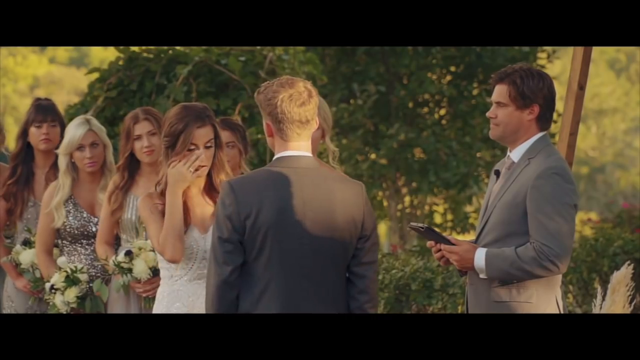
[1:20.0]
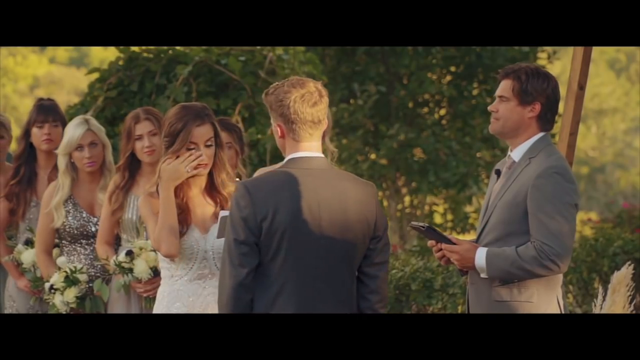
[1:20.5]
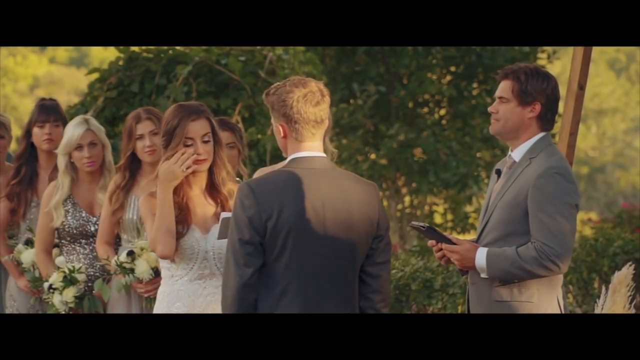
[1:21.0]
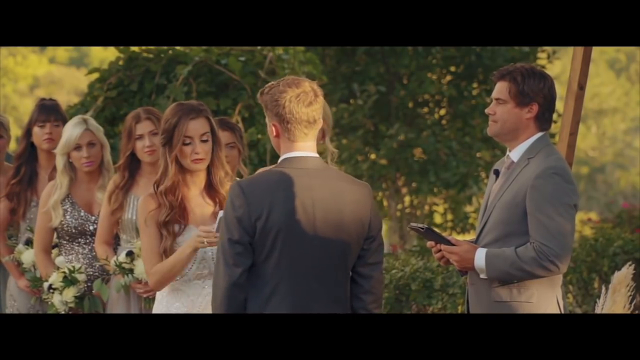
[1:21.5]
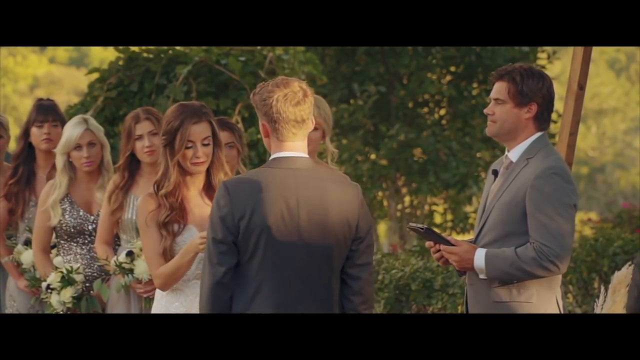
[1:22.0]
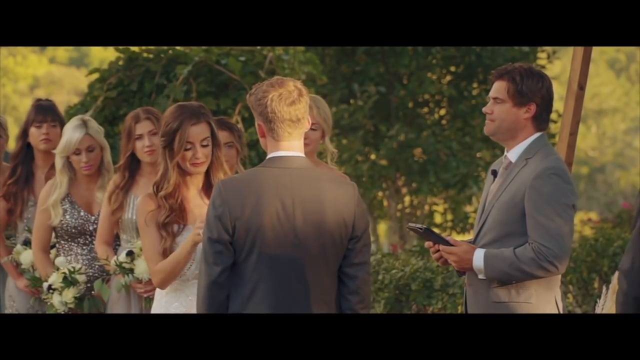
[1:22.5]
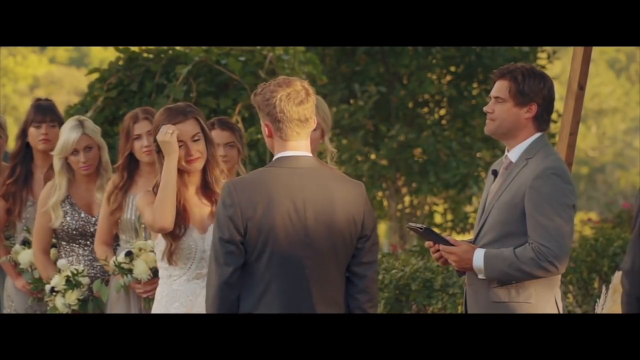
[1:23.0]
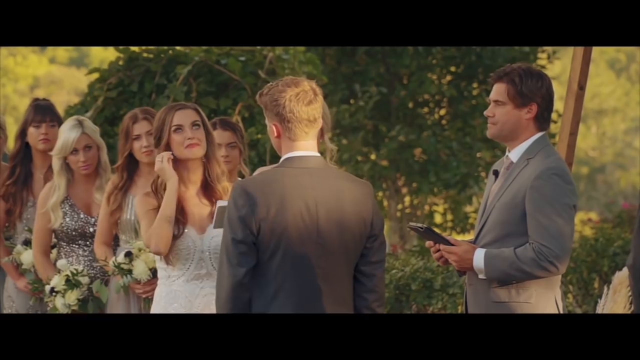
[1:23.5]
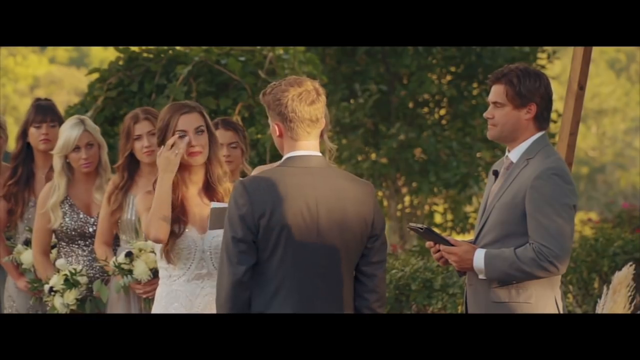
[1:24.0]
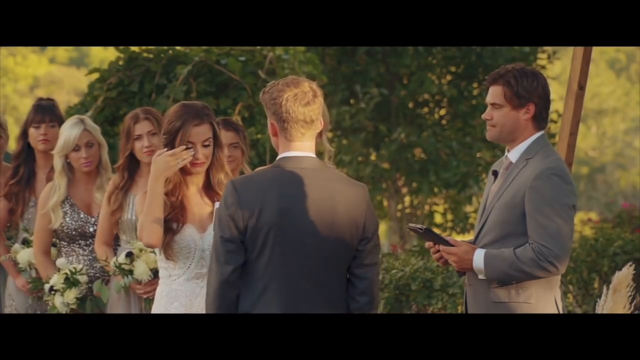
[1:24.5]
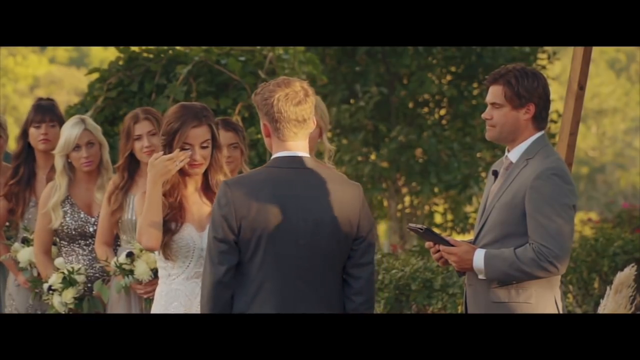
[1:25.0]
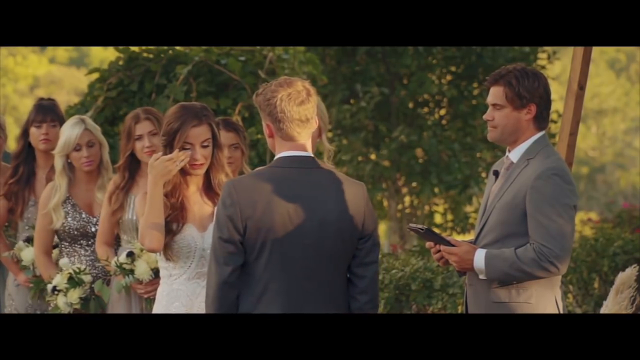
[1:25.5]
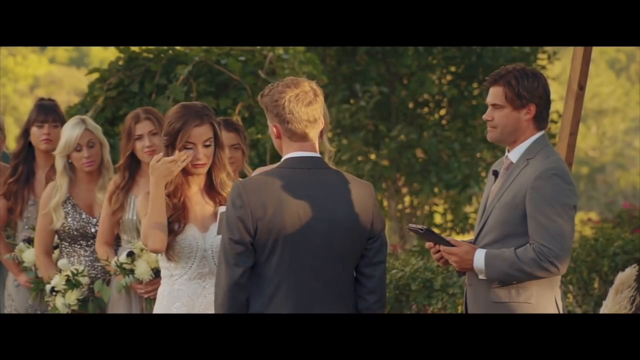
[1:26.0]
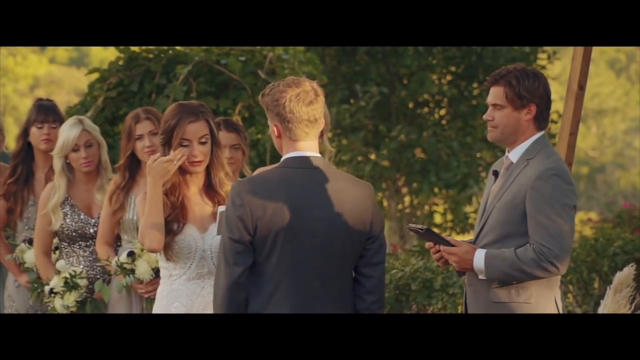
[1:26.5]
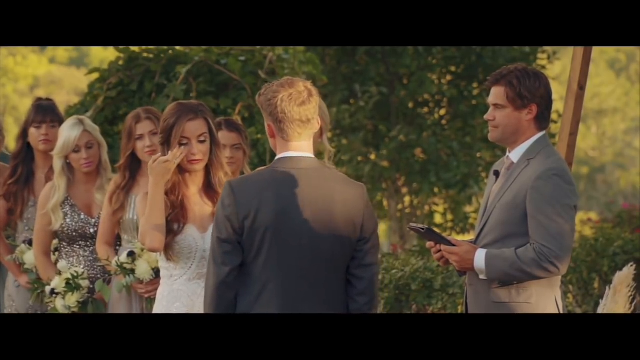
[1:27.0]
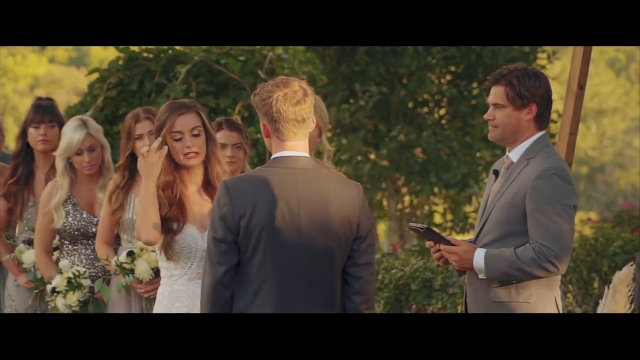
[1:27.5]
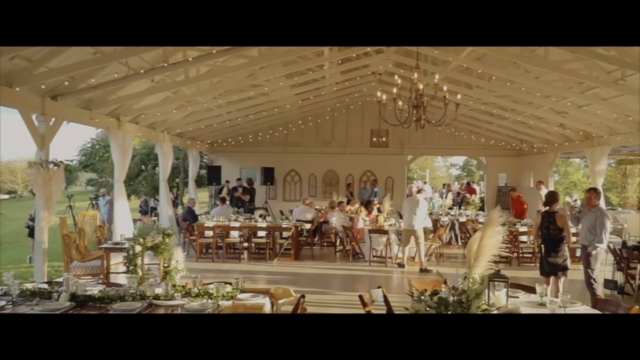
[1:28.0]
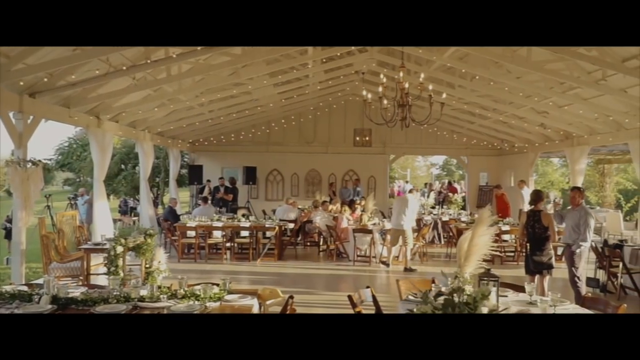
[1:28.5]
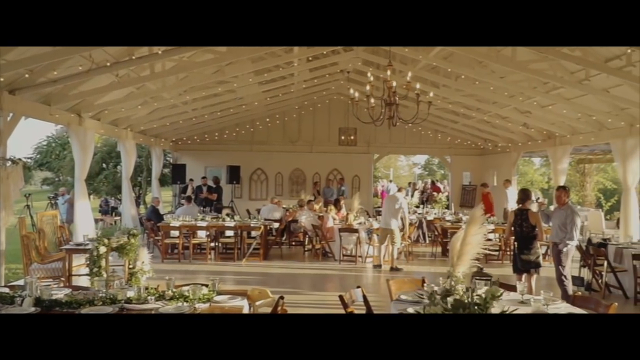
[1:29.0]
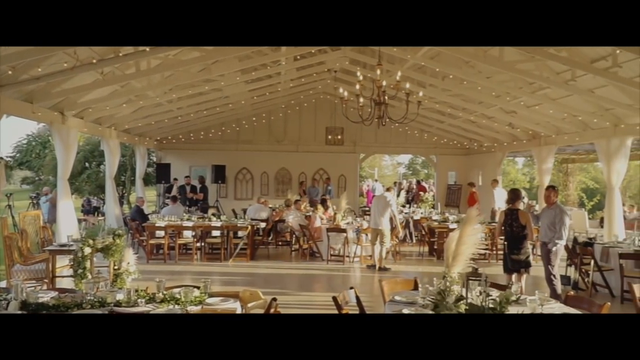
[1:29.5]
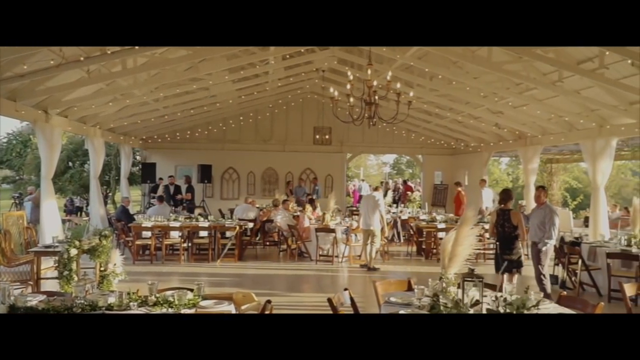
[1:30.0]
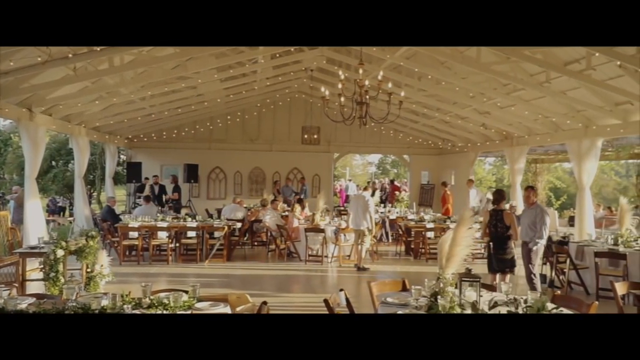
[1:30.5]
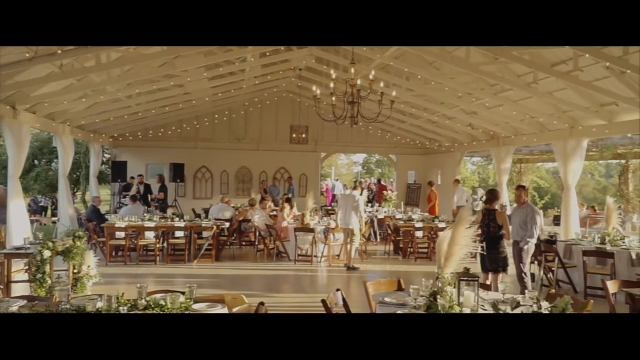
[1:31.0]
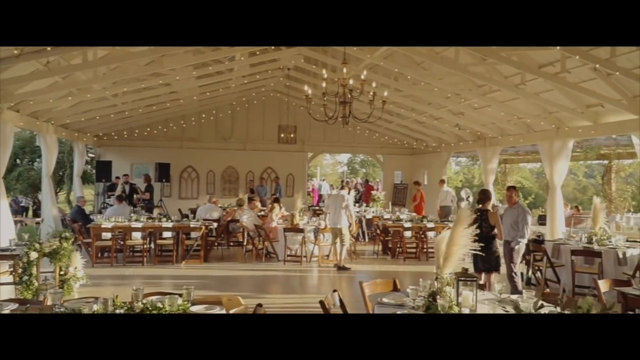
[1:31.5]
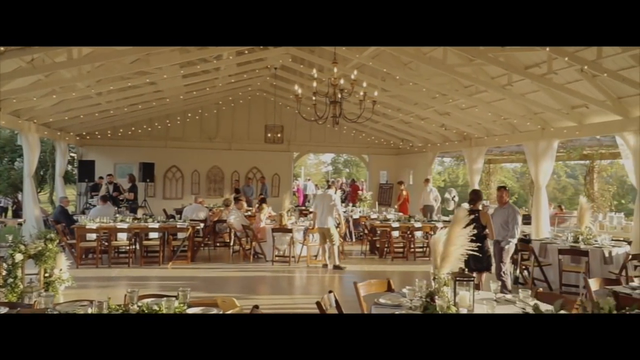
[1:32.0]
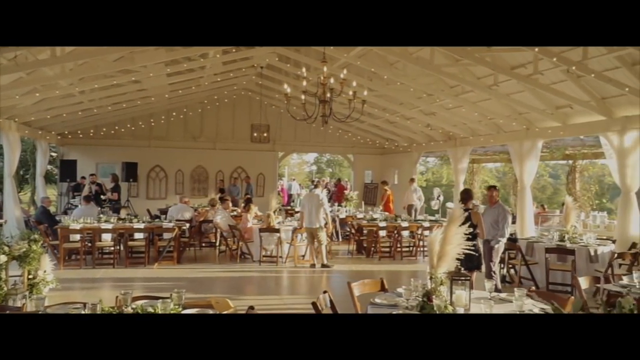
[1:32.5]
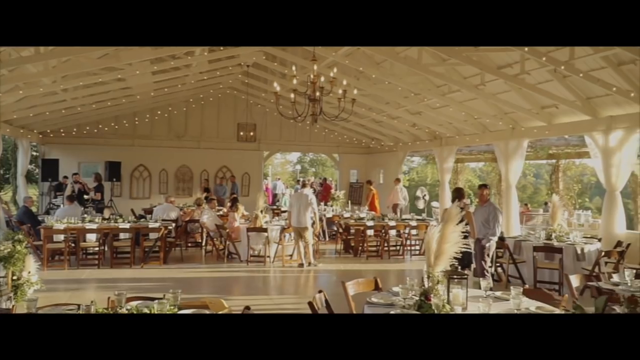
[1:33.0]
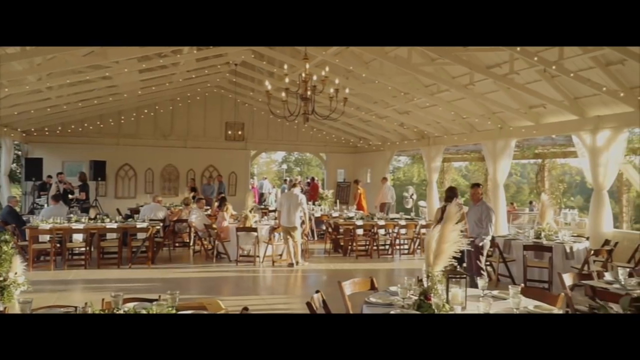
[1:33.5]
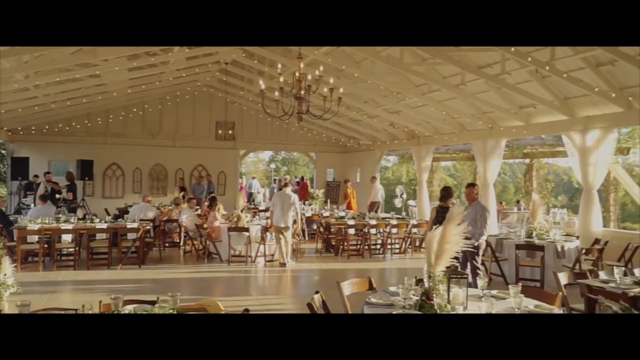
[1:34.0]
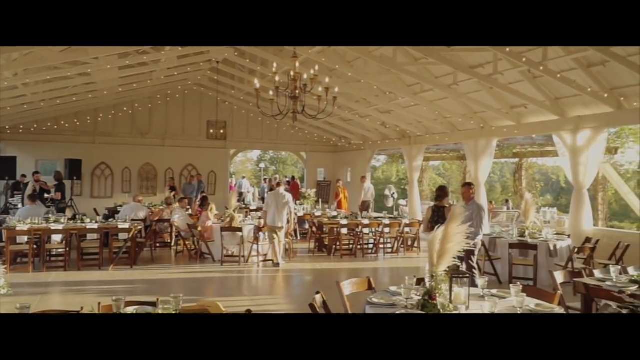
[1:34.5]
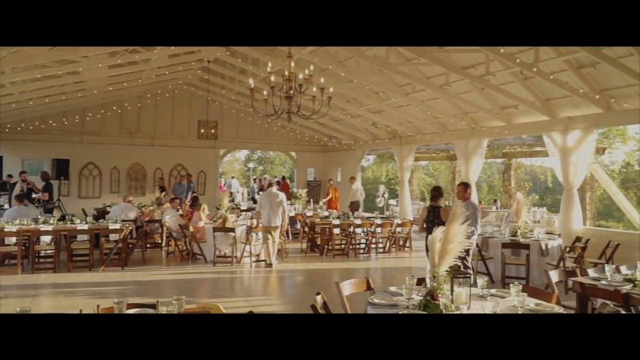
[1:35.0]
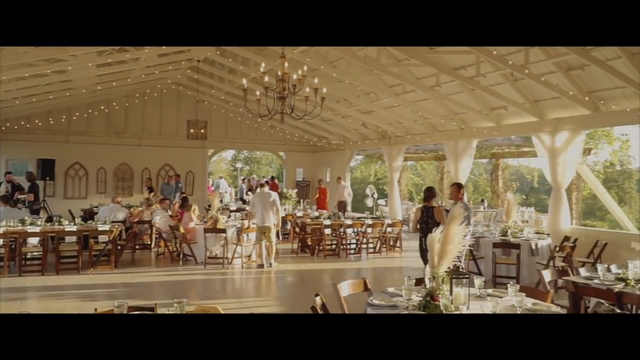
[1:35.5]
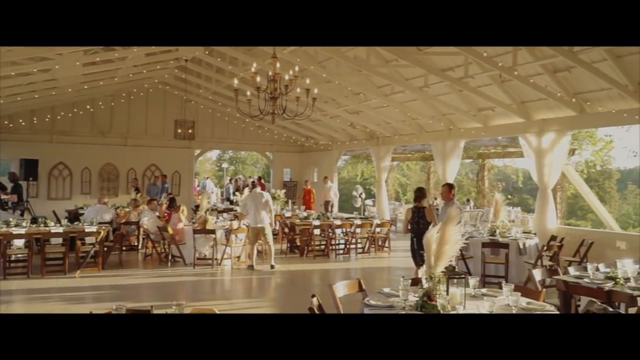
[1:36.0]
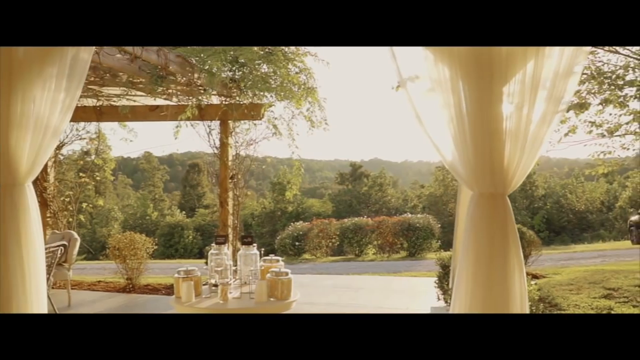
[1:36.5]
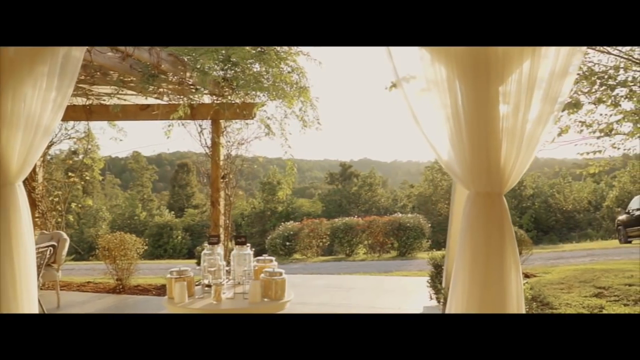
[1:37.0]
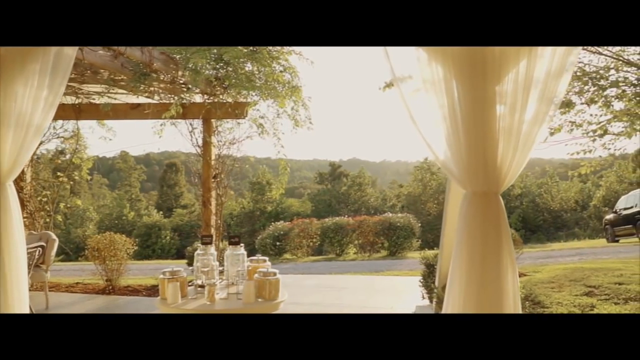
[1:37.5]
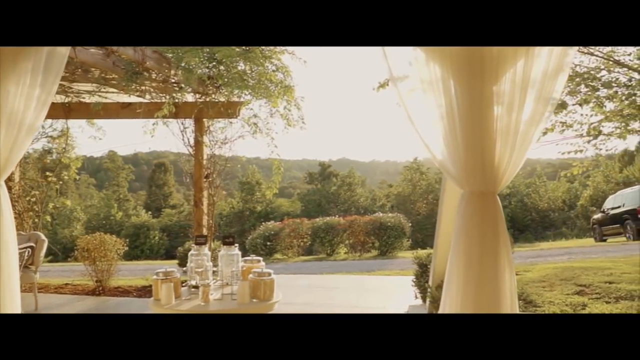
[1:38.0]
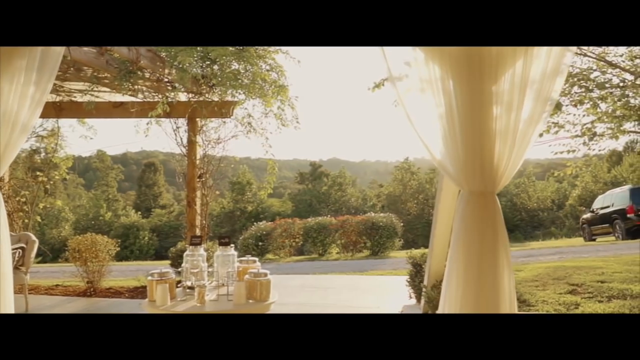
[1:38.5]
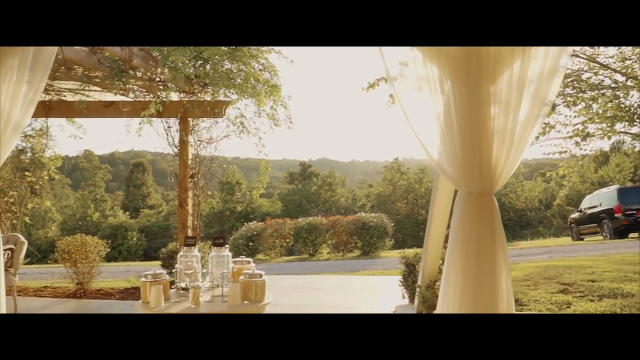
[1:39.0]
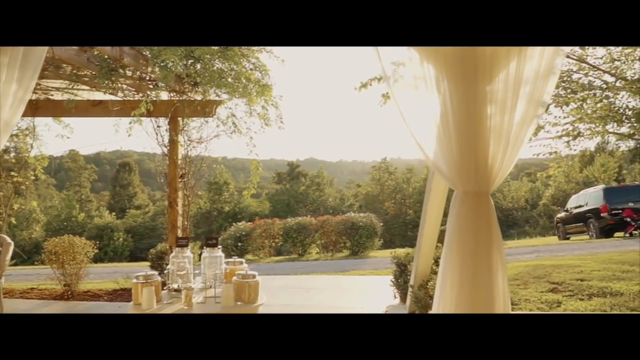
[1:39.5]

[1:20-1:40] The woman continues reading her vows and wipes a tear from her face; a ring is noticeable on her finger. She keeps wiping tears as she cries while speaking, tries to contain herself, and looks off to keep her composure before continuing to read. The scene cuts to the camera panning inside to where it looks like the food will be served, where a man is brushing the floor or moving his leg as he moves to the right and then to the left. The video then cuts to another shot.